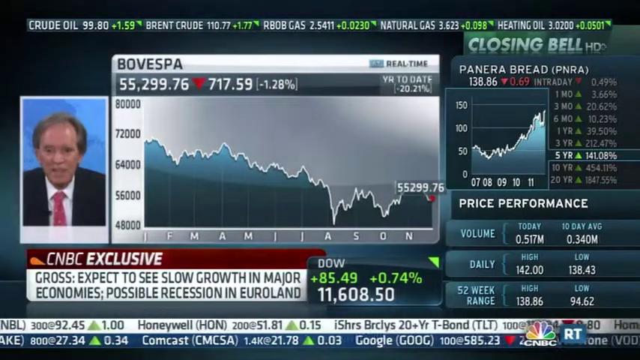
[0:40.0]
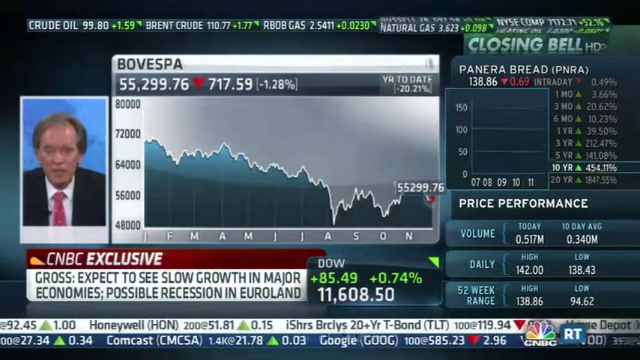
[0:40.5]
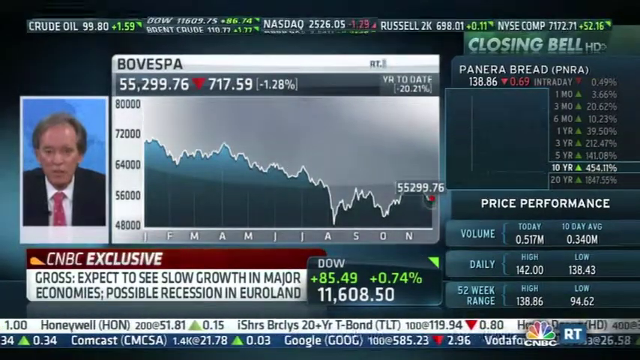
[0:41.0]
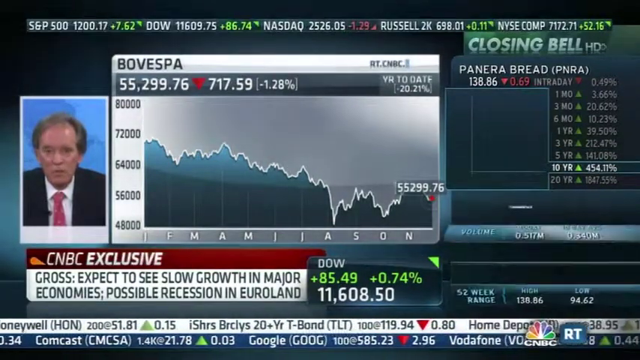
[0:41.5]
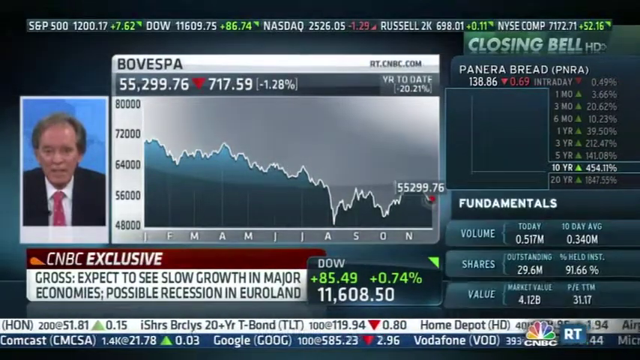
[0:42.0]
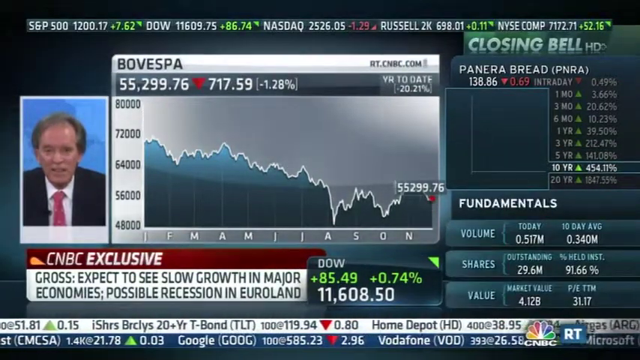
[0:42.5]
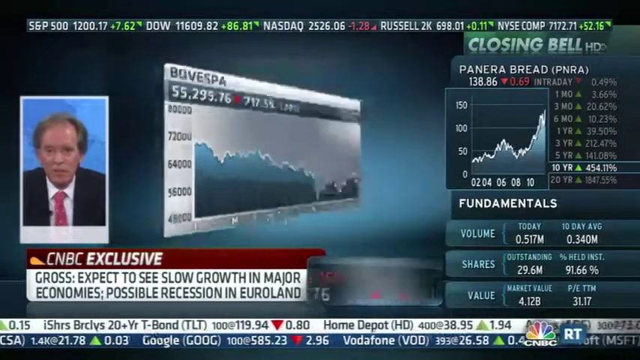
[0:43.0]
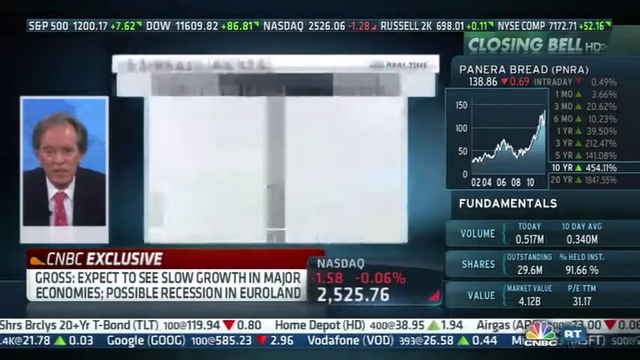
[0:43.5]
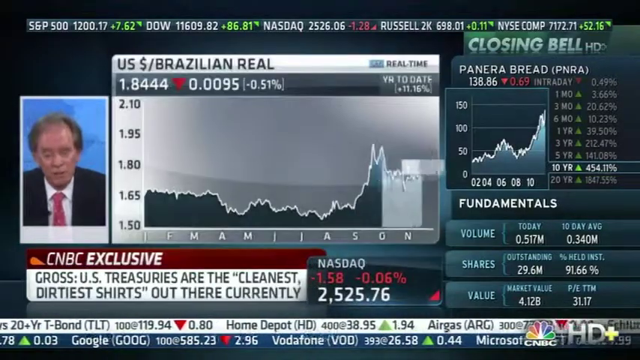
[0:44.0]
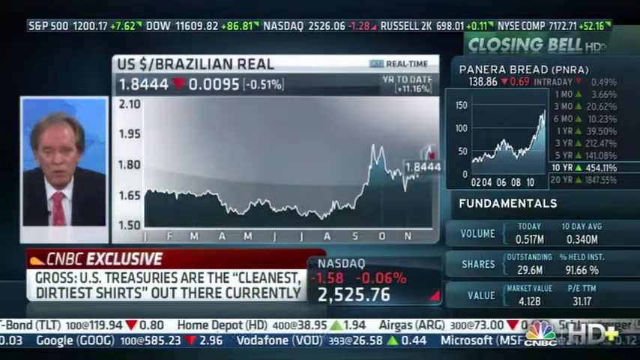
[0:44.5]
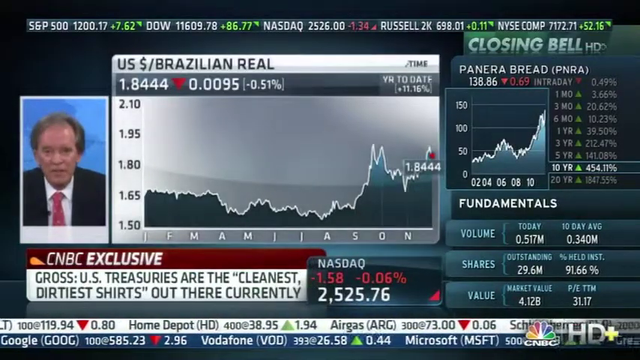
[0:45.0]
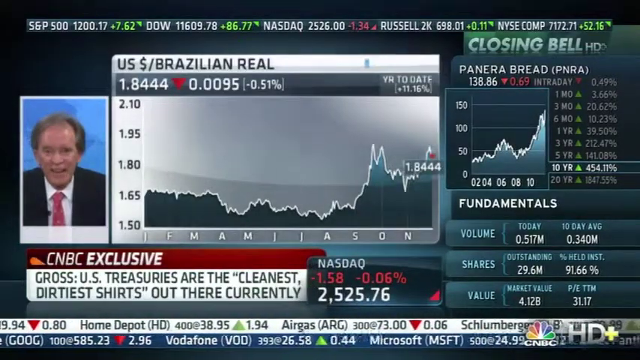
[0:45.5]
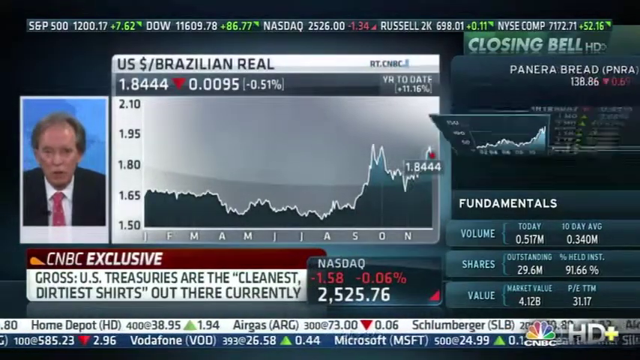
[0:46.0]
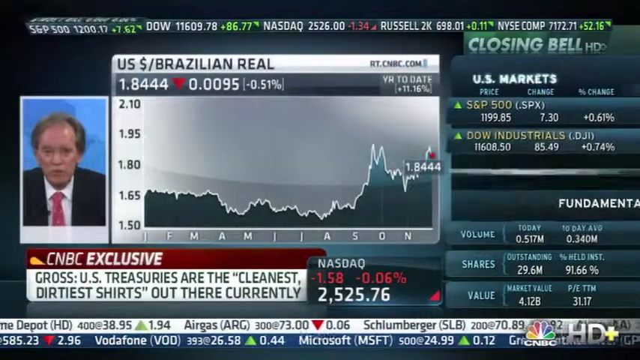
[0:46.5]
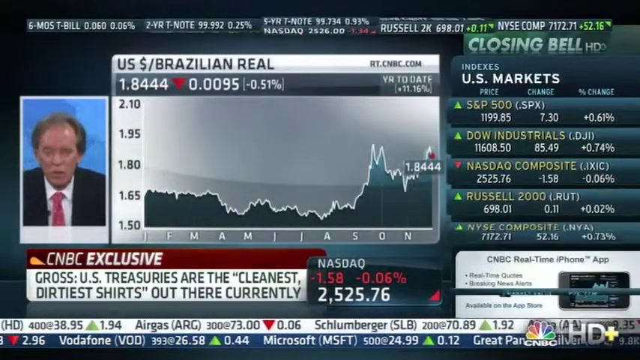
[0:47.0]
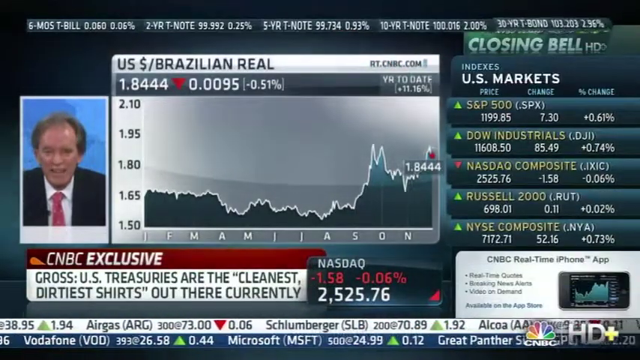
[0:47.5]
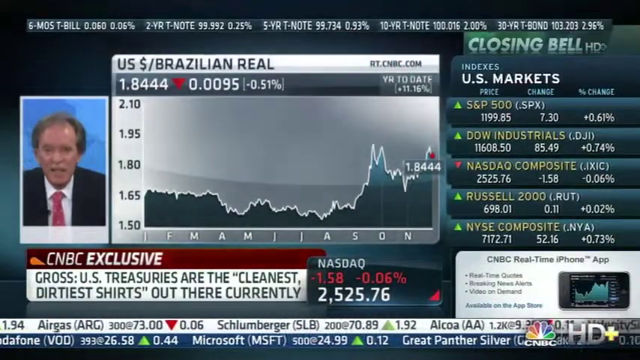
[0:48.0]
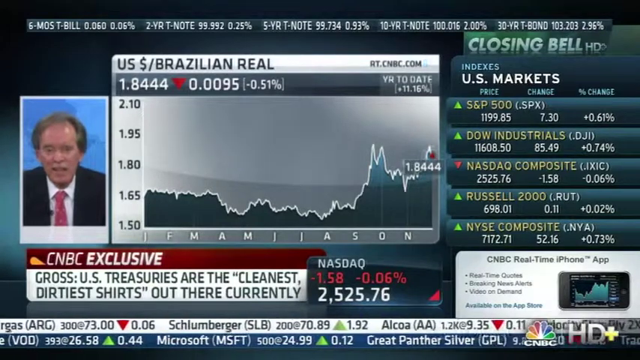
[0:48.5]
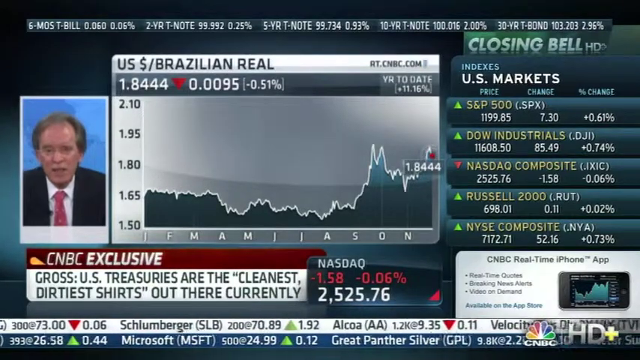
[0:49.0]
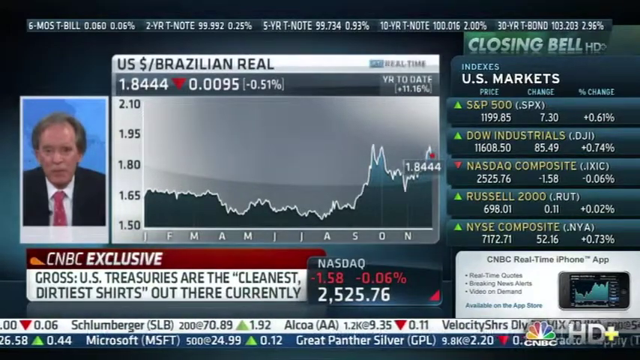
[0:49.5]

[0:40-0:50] The main part of the screen displays financial data and a graph related to stocks. A graph of the Bovespa index is shown first with a value of 55299.26, a red down arrow, 717.59 points and minus 1.28 percent, in white text on a dark background. Below, "CNBC Exclusive" is written on a brown background, and below that, at the bottom on a white background, is "gross: expect to see slow growth in major economies, possible recession in Euro land". The Dow Jones industrial average is shown on the right side with a value of 11608.50, an up arrow, 85.49 points and plus 0.74 percent in green. Scrolls of stock tickers run along the top and bottom of the screen. A man speaks toward the camera. On the right side, a graph and data are on a dark background. The graphic then changes to a US $/Brazilian Rial graph with values of 1.844, a red down arrow, 0.0095 and minus 0.15 percent, and a NASDAQ value now appears at the bottom, replacing the Dow Jones value.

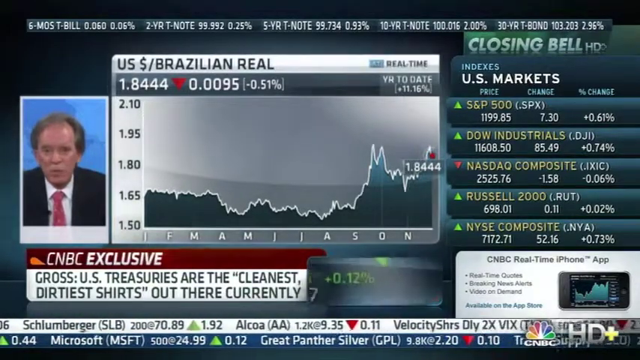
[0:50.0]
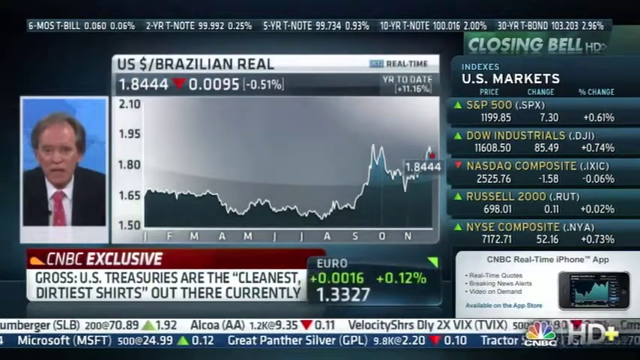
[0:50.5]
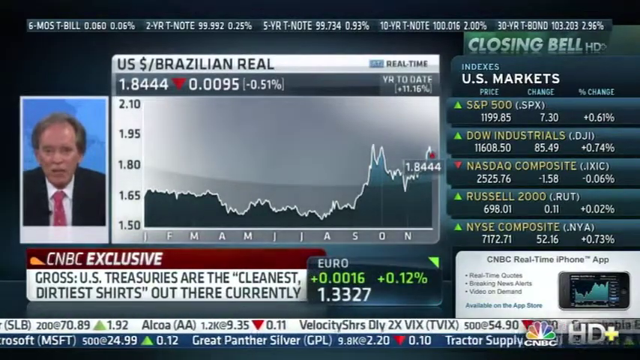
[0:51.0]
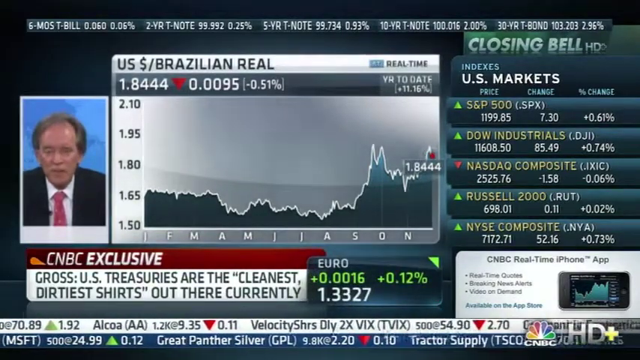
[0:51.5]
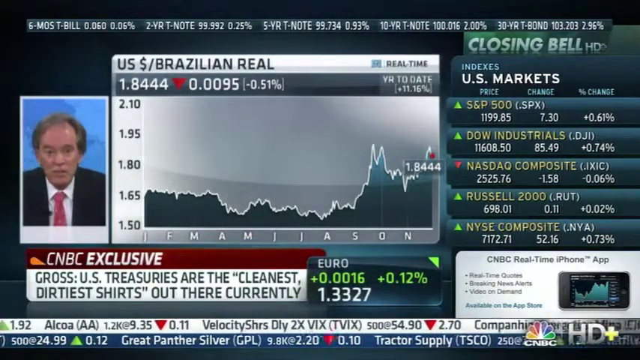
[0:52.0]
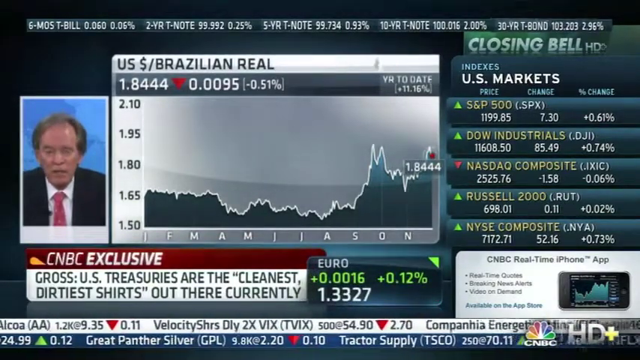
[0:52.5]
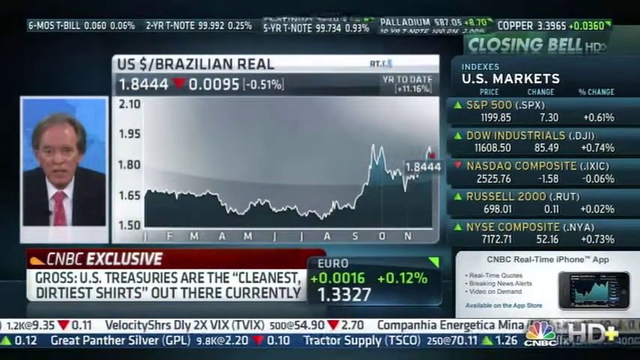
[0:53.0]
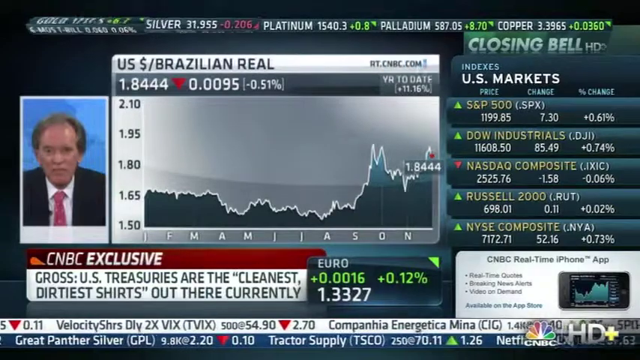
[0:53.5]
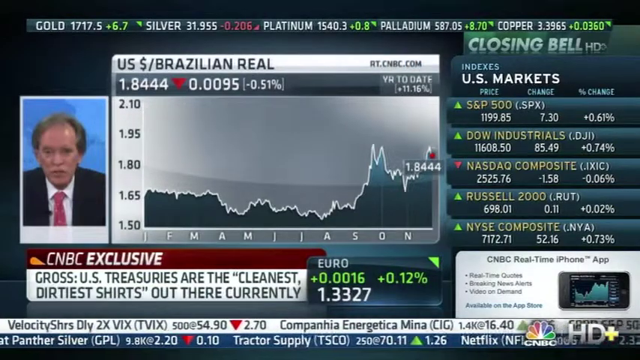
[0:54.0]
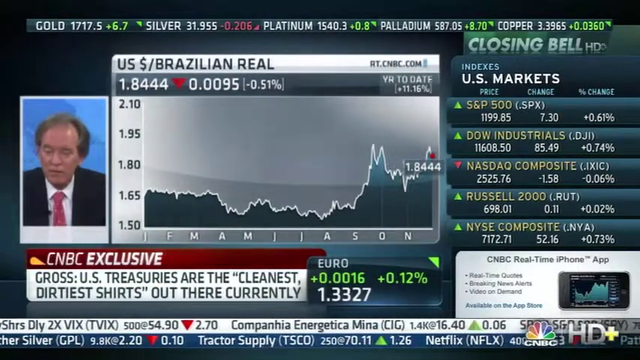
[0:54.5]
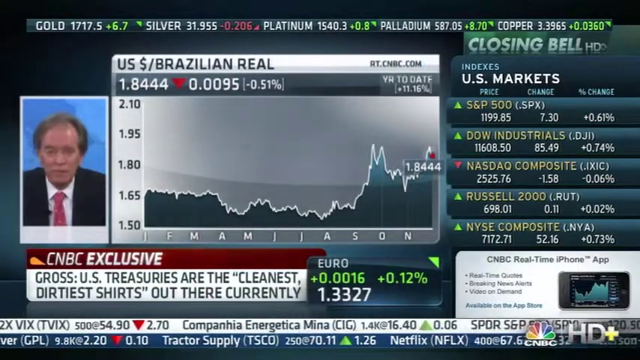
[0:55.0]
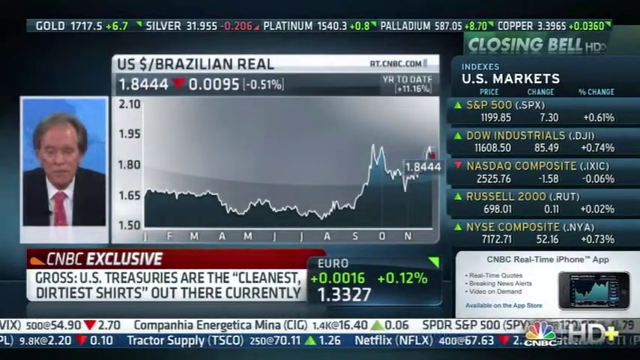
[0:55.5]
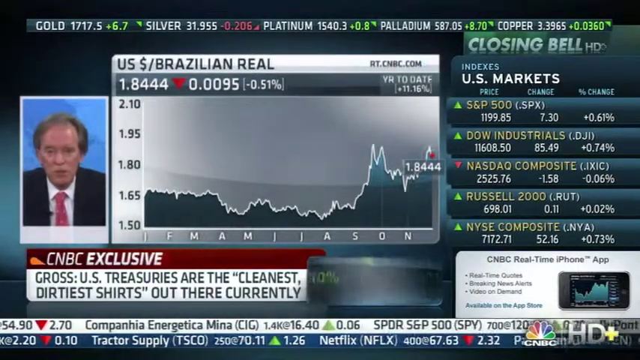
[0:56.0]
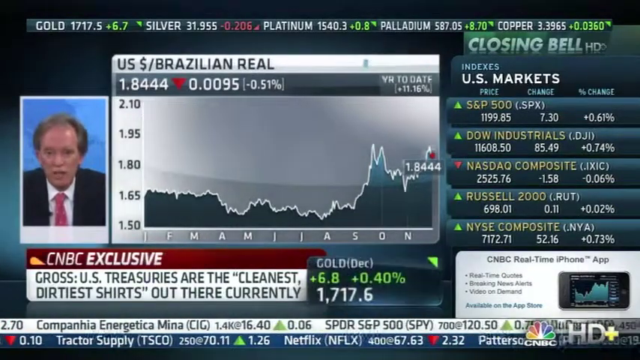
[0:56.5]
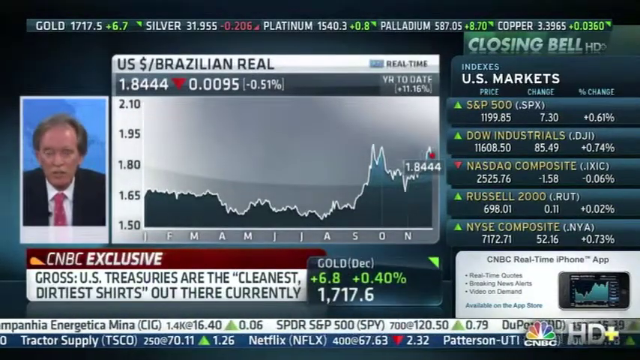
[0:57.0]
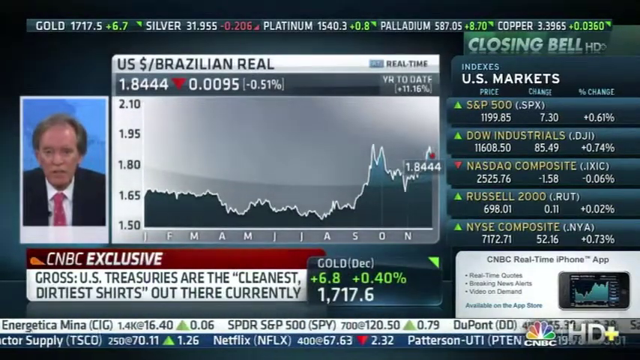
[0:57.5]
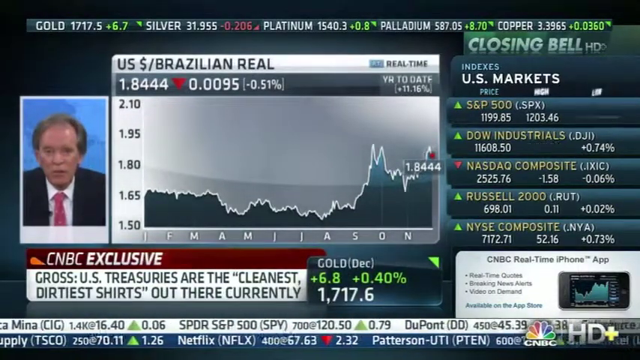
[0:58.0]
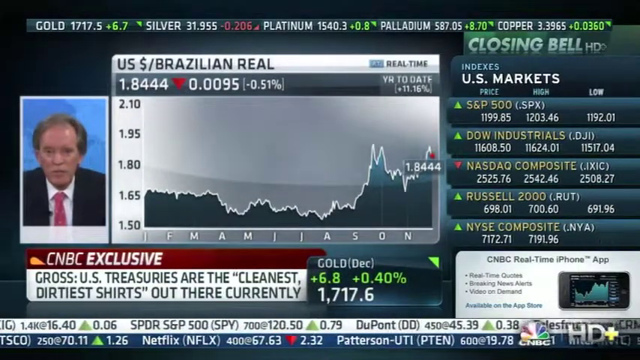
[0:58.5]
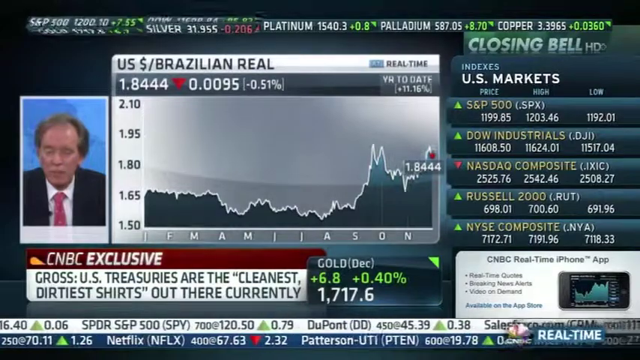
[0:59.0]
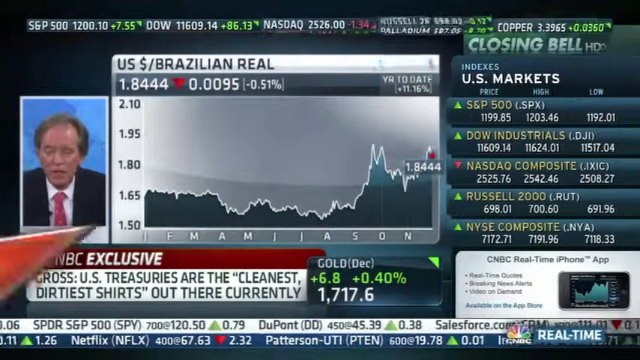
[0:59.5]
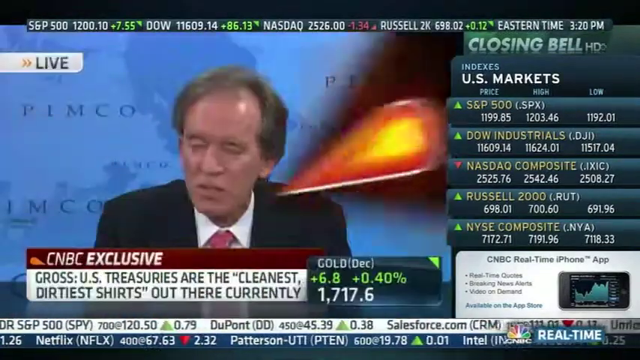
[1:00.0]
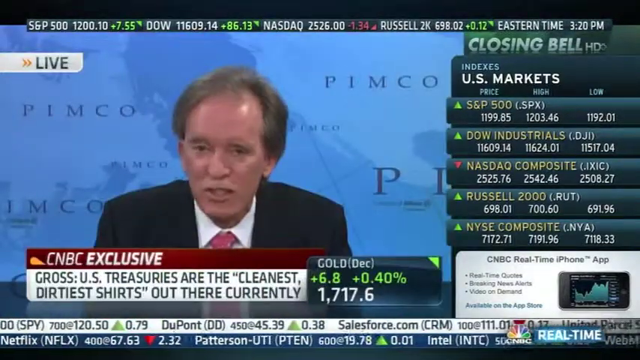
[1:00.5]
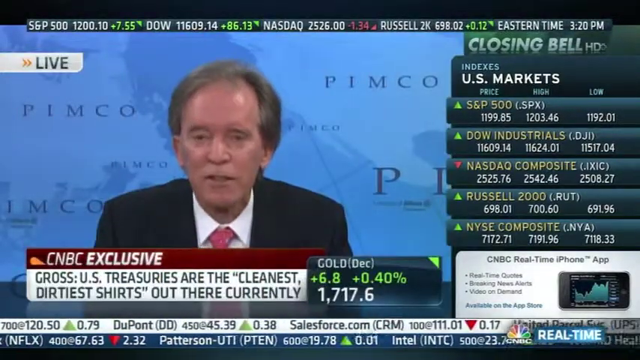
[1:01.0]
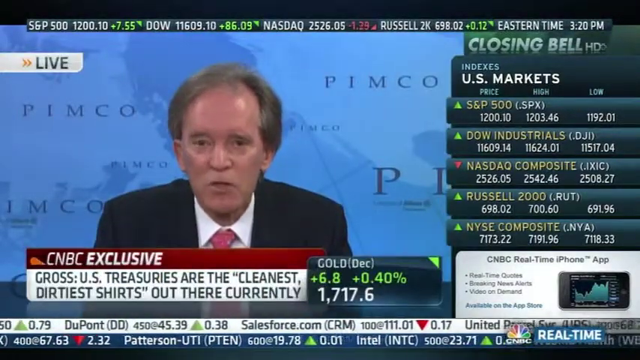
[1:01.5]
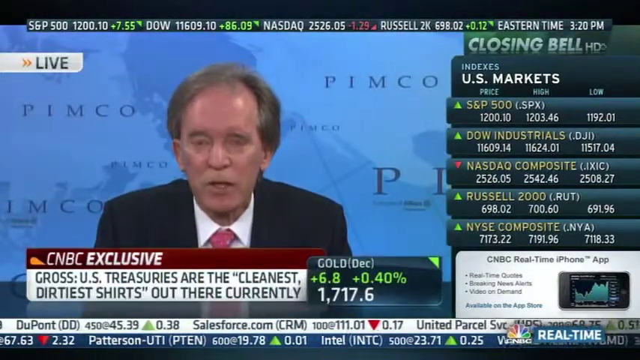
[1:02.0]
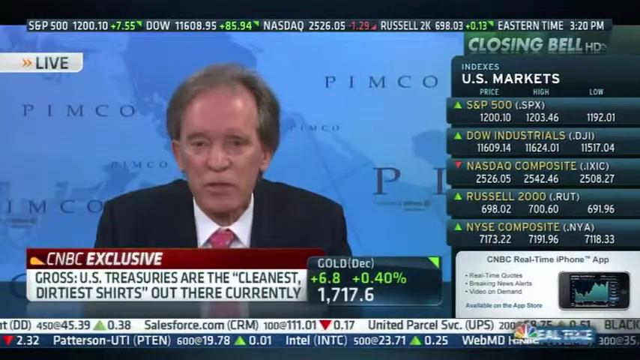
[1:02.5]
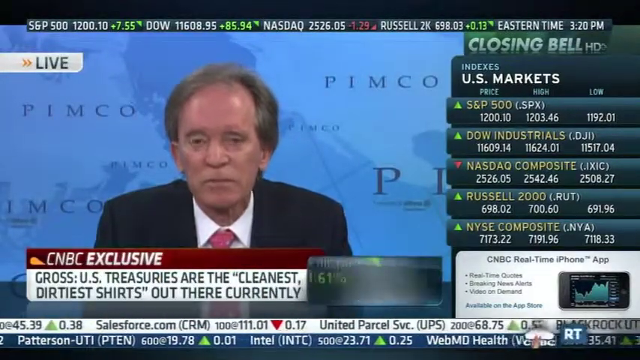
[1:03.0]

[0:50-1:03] The main screen displays financial data in a graph related to stocks. A US $/Brazilian real graph shows a value of 1.8444, a red down arrow, 0.0095 and minus 0.51 percent, written in white on a dark background. A graphic is placed to its left, alongside a man in a suit facing the camera and speaking. Scrolls of stock tickers run along the top and bottom of the screen. Below the graph, "CNBC exclusive" is written in white on a brown background, and below this banner, in a white box, "gross US treasuries are the cleanest dirtiest shirts out there currently" is written in two lines. To its right, data such as gold and Euro is shown, and the right portion of the screen has data on different US market indices such as S&P Global, Dow Industrials and NASDAQ Composite. The screen then transitions, and the presenter's video becomes the main content, with a blue background showing "PIMCO" written in varying font sizes. A live tag is in the left corner.